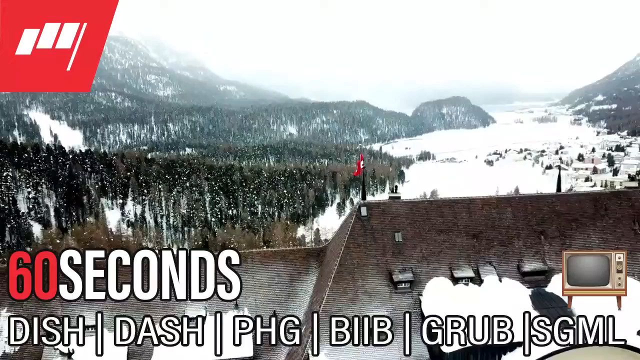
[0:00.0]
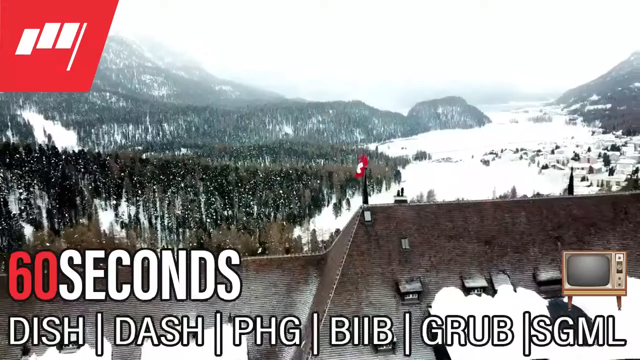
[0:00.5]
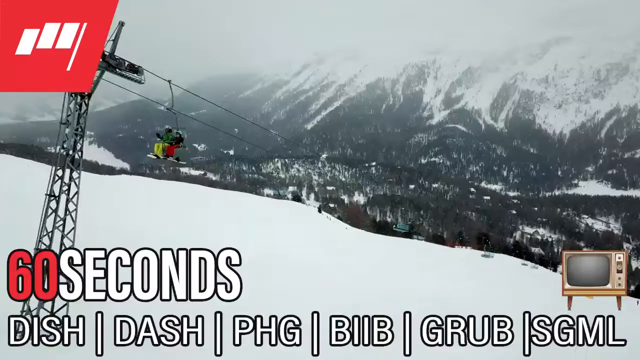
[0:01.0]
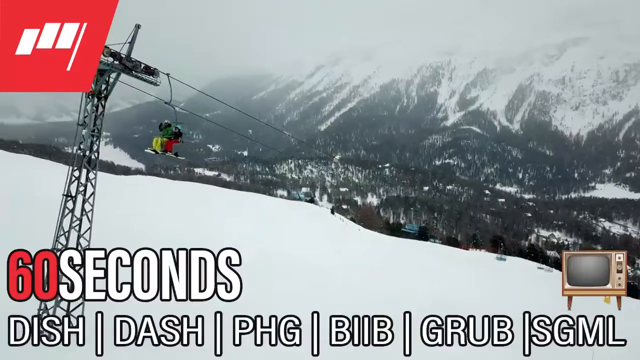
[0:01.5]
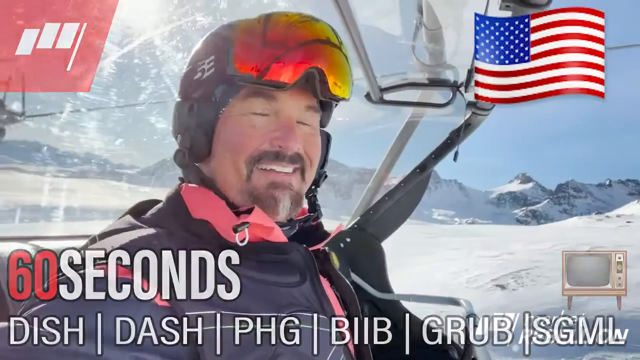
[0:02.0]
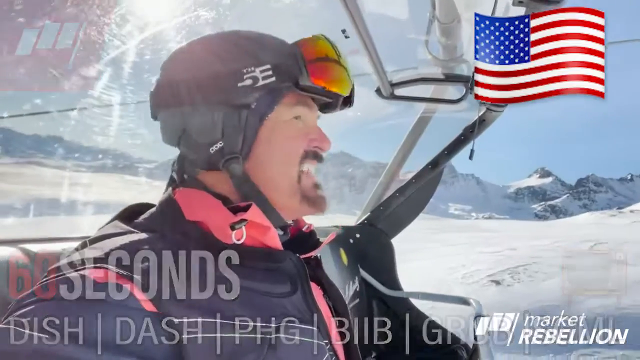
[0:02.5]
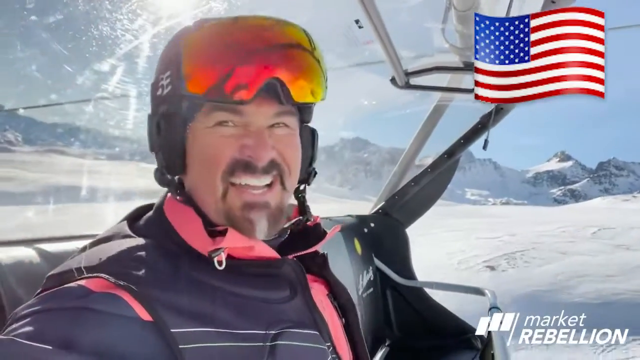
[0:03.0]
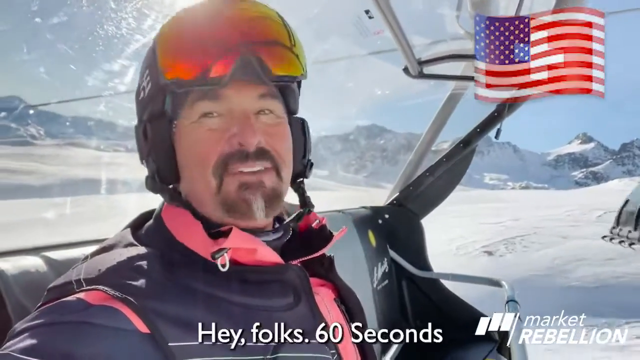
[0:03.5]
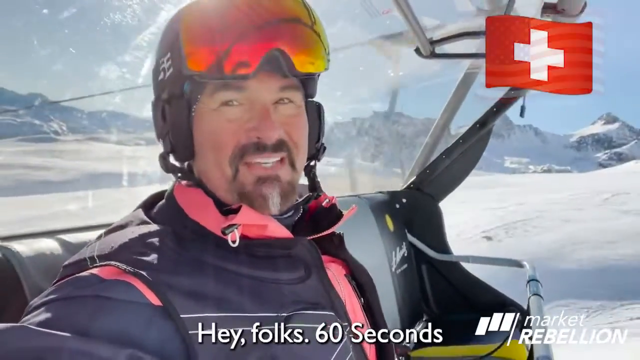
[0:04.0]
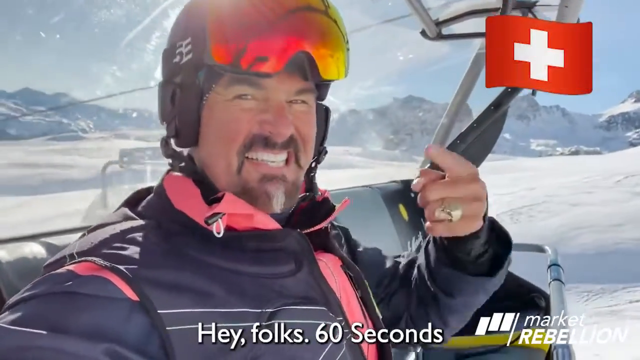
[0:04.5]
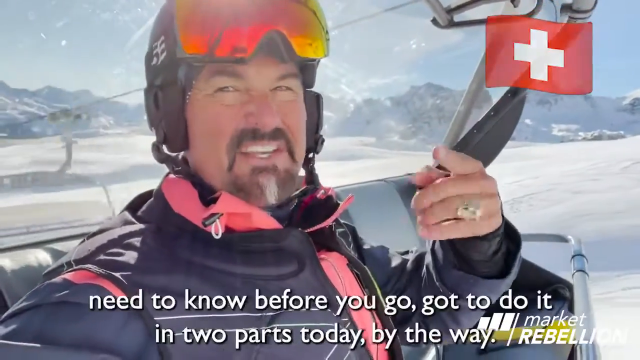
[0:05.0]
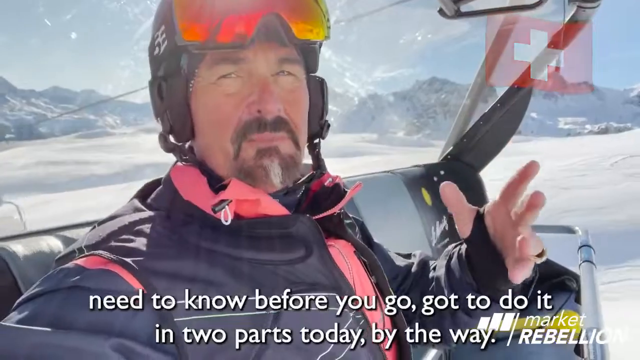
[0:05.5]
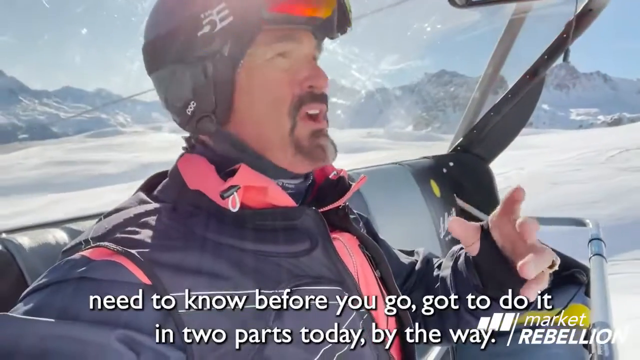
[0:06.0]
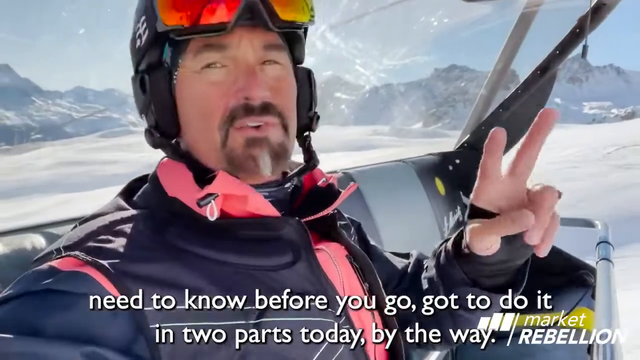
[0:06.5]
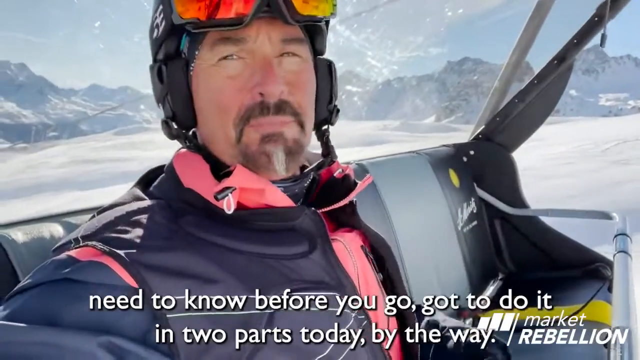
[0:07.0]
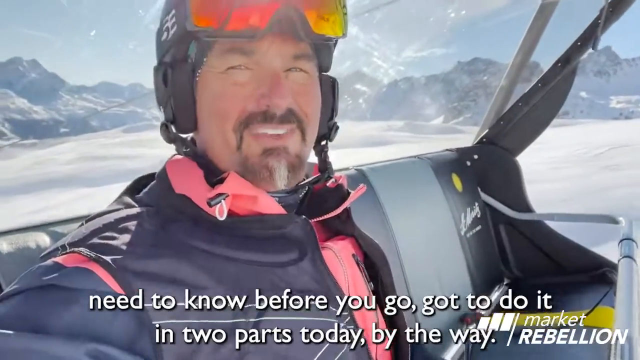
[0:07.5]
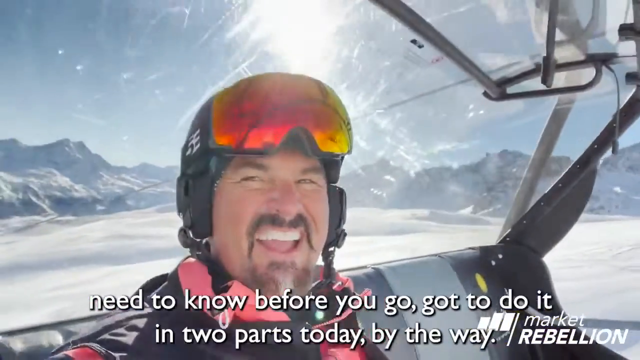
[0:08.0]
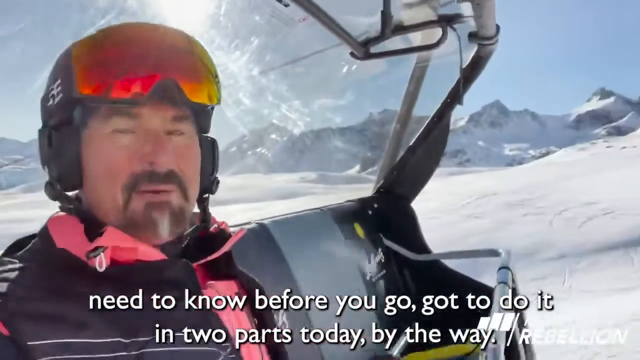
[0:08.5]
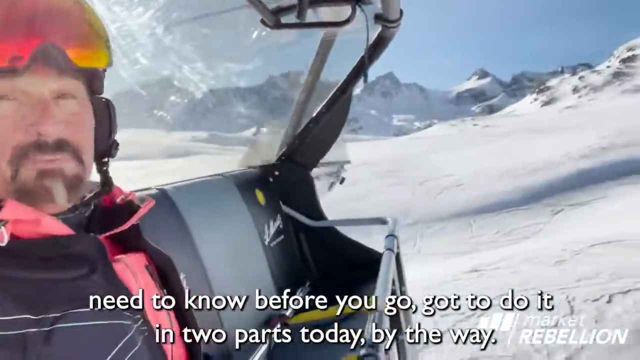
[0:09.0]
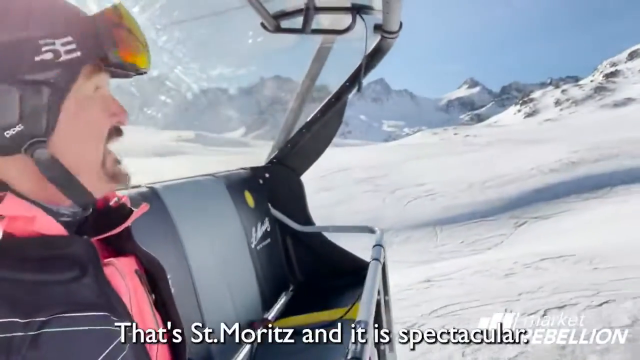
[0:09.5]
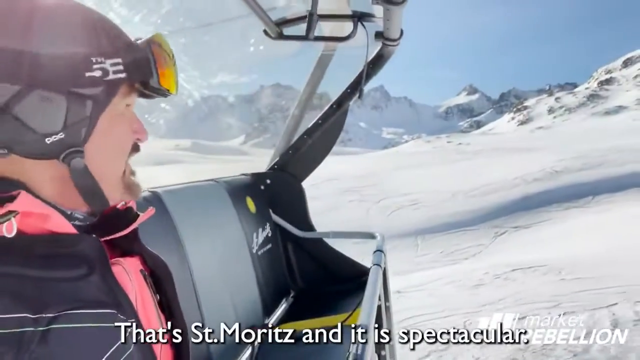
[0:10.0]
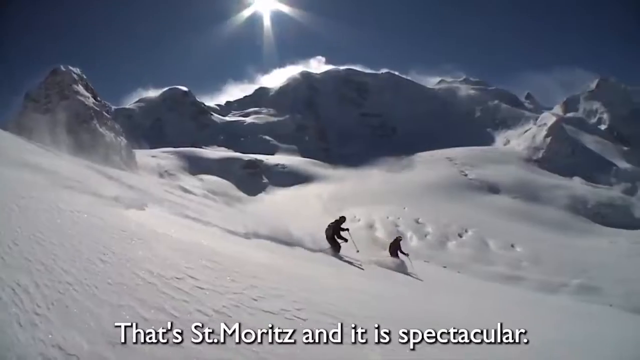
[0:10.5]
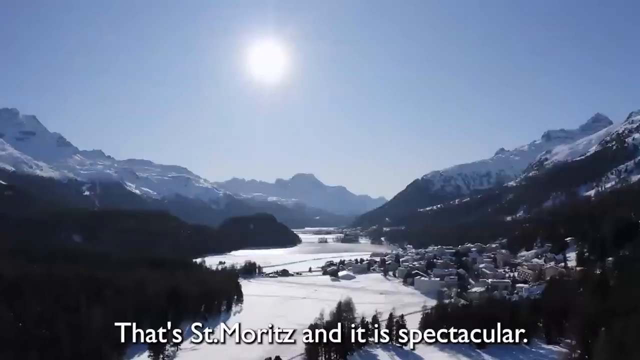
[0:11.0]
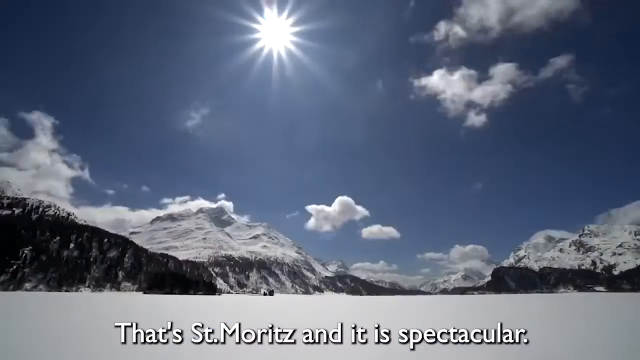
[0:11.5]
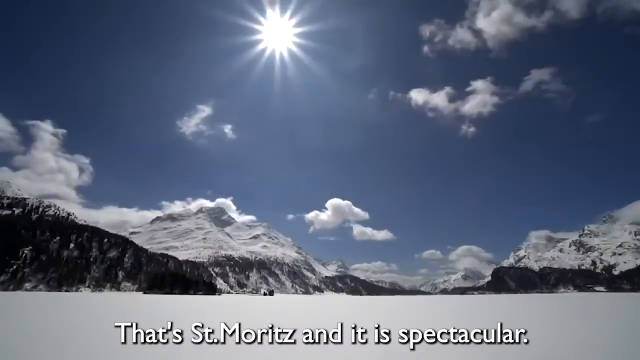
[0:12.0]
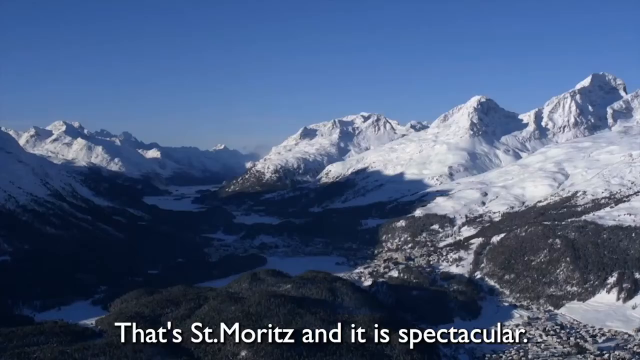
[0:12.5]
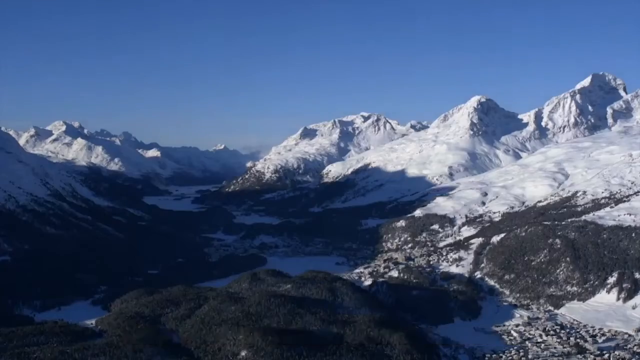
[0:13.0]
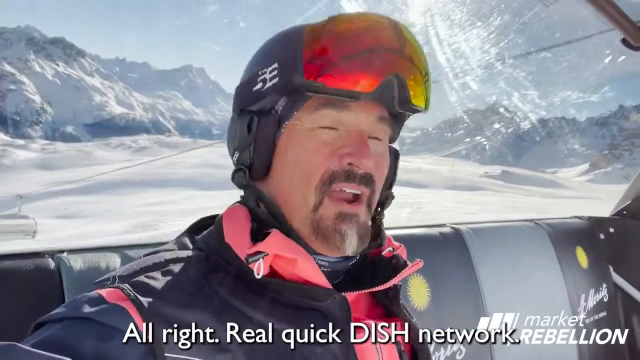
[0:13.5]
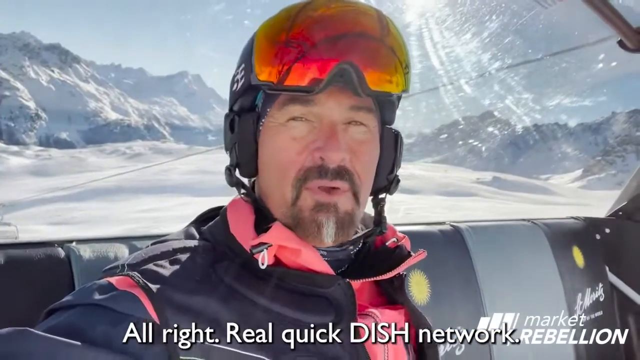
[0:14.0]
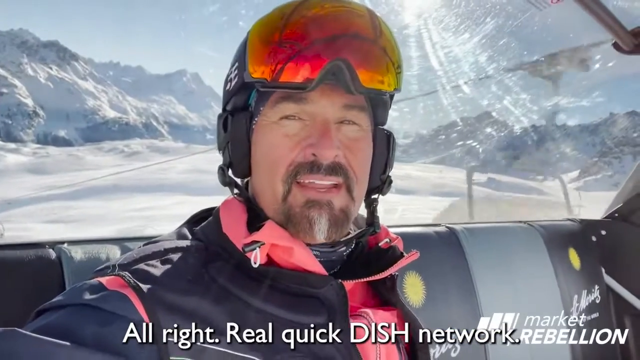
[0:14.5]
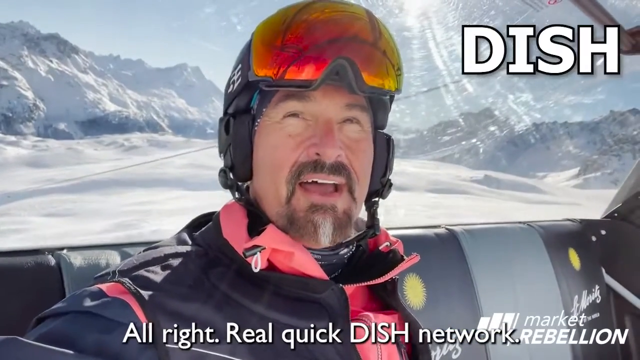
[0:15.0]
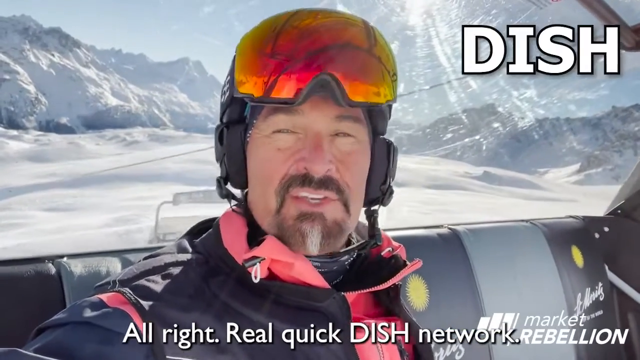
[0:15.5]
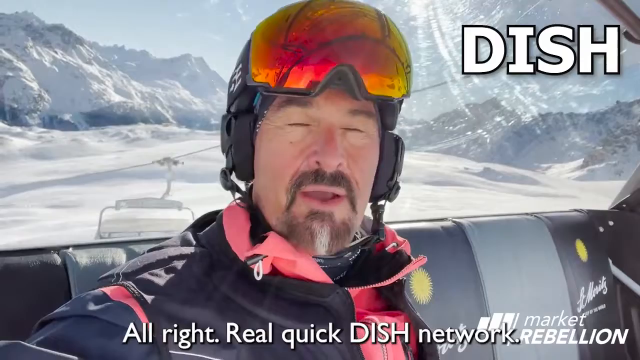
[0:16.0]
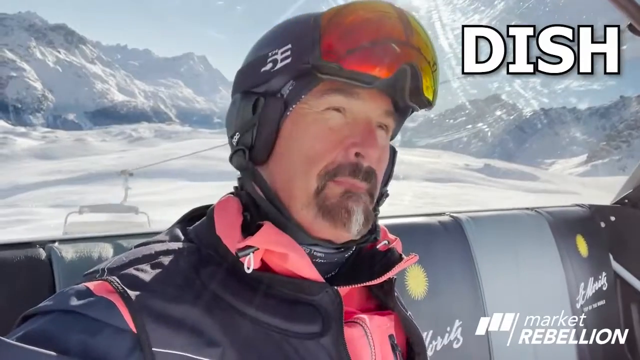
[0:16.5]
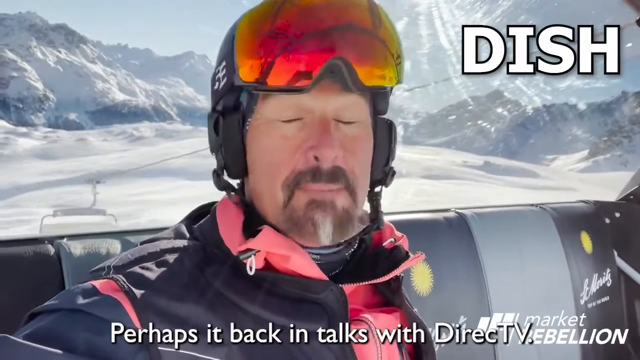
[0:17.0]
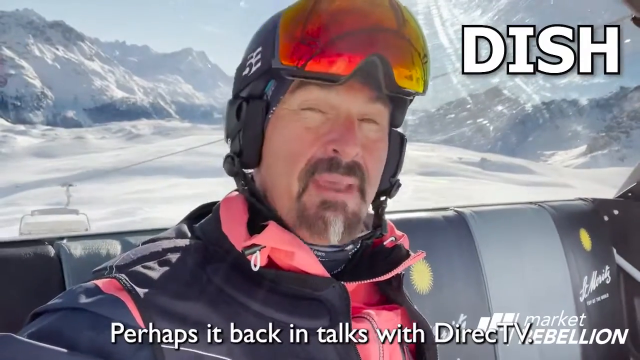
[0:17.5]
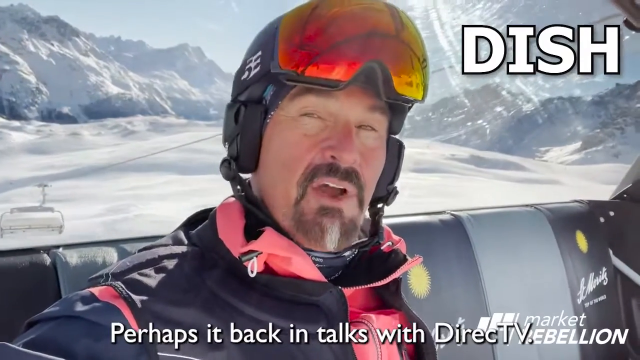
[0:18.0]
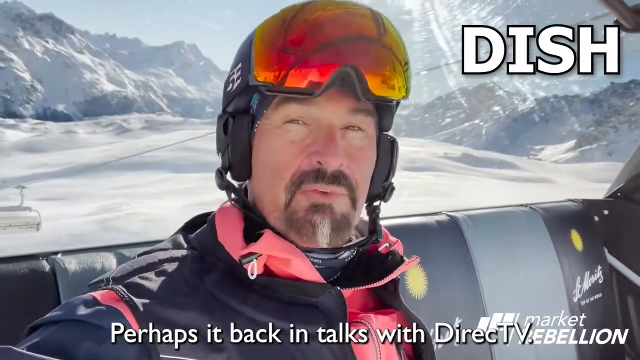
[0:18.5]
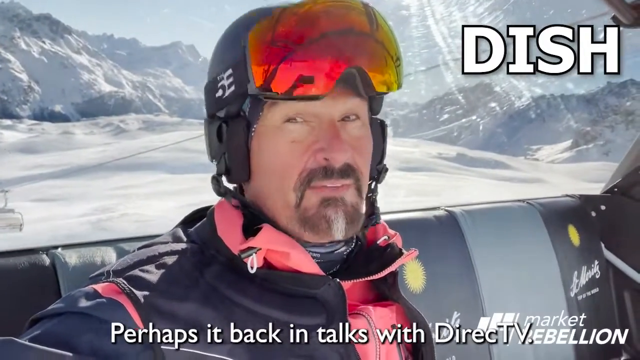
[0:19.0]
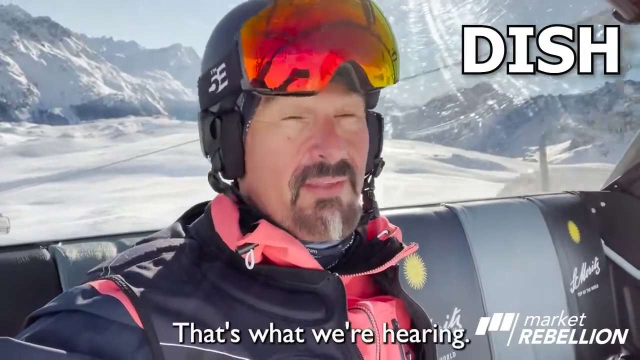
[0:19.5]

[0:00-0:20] A very snowy field with a number of trees appears, and people are skiing. A man in full ski gear rides up the slopes on the lift system that carries skiers up. Captions appear on screen, including "need to know before you go", "that's saint mortis and it is spectacular" and "all right, real quick dish network".